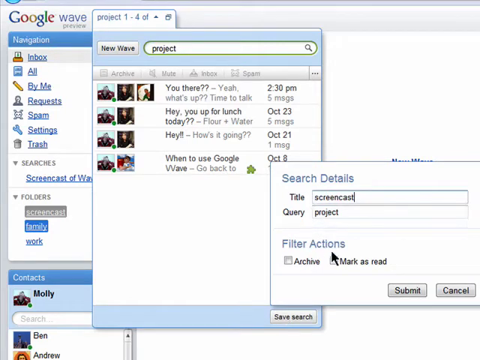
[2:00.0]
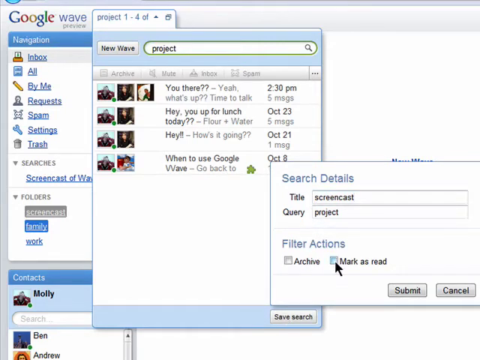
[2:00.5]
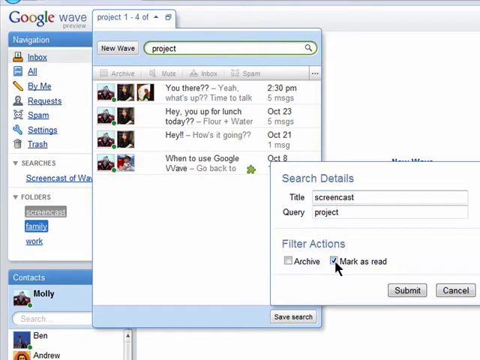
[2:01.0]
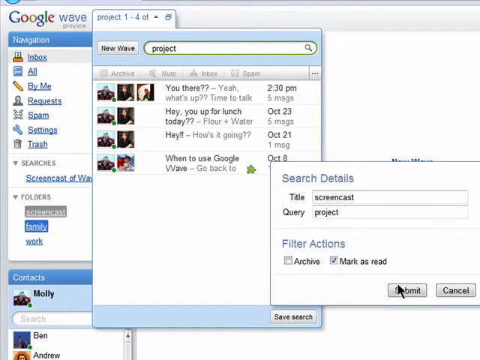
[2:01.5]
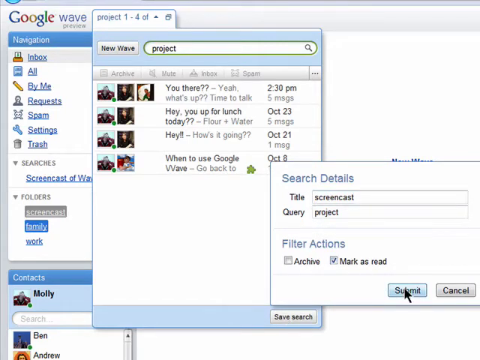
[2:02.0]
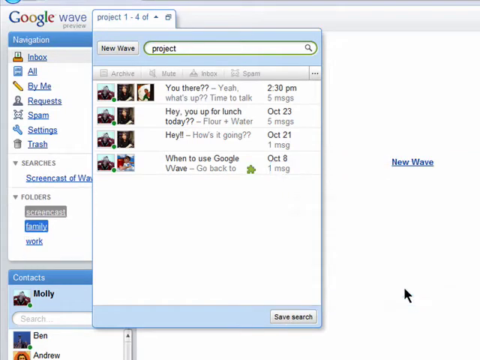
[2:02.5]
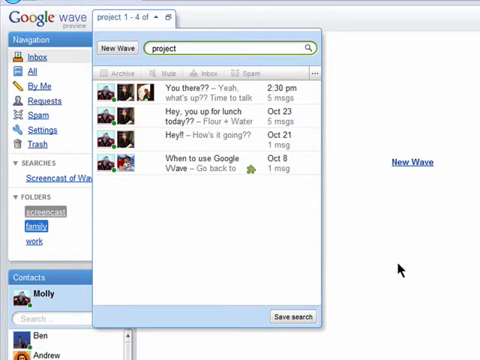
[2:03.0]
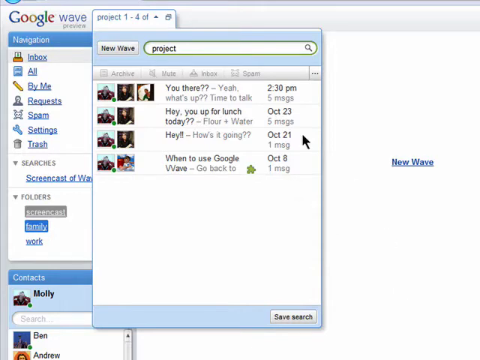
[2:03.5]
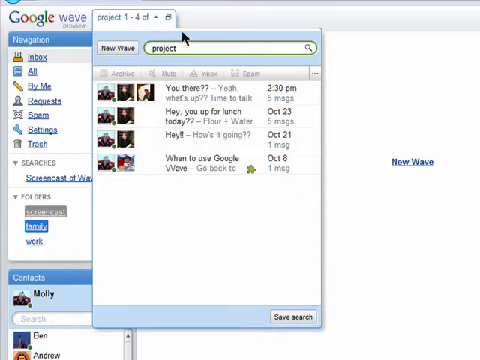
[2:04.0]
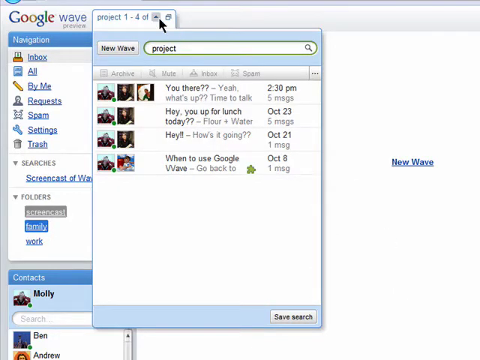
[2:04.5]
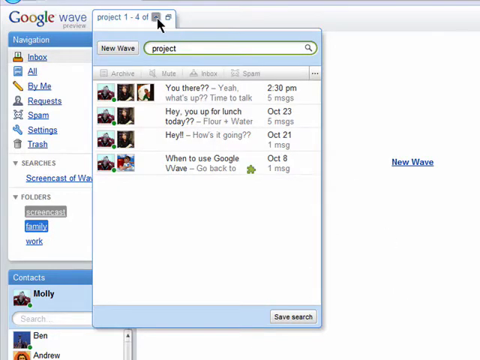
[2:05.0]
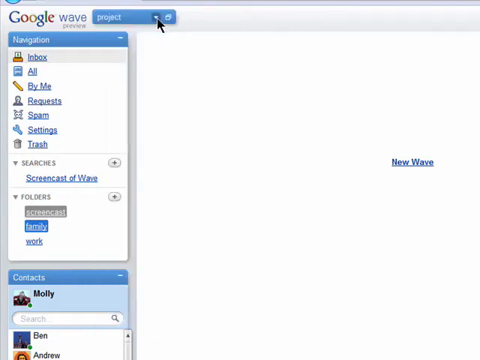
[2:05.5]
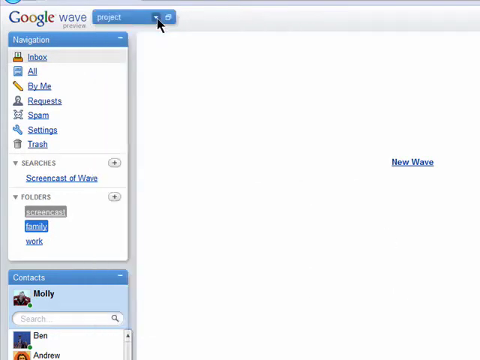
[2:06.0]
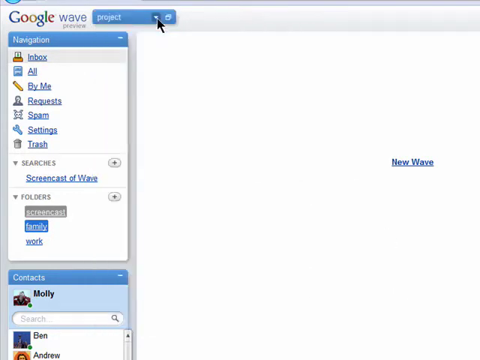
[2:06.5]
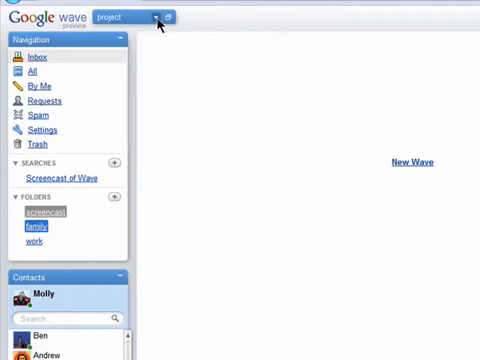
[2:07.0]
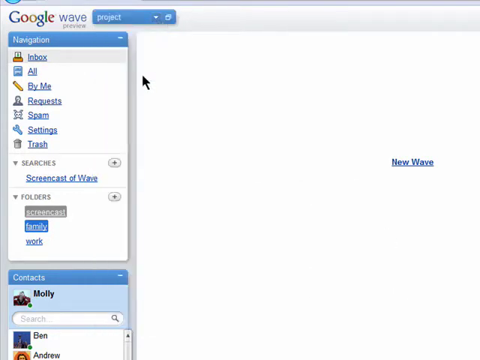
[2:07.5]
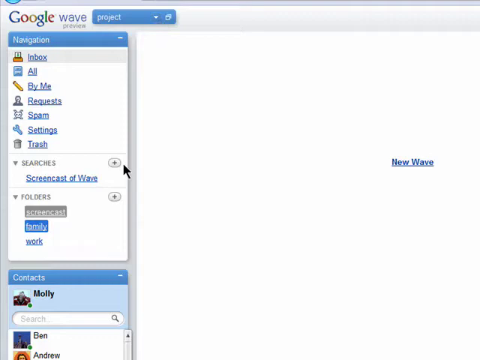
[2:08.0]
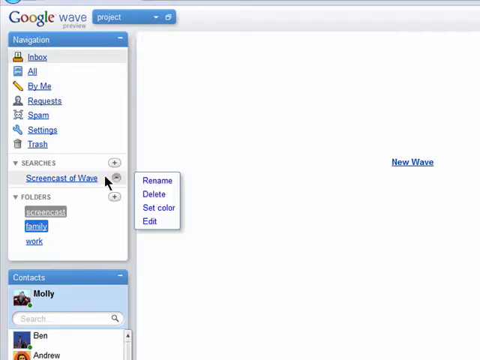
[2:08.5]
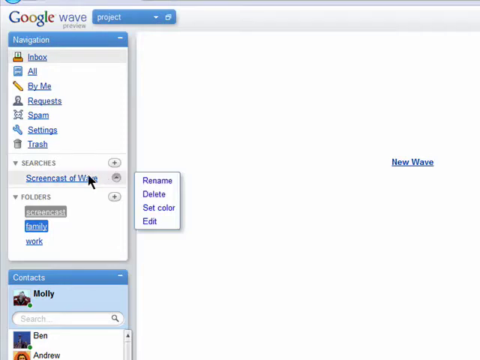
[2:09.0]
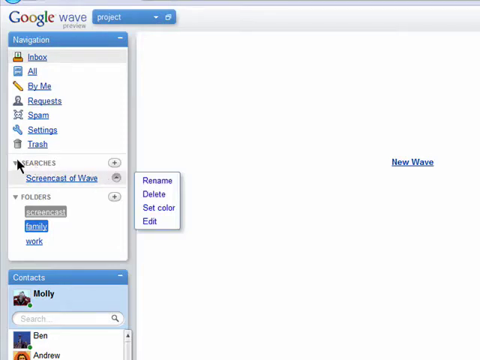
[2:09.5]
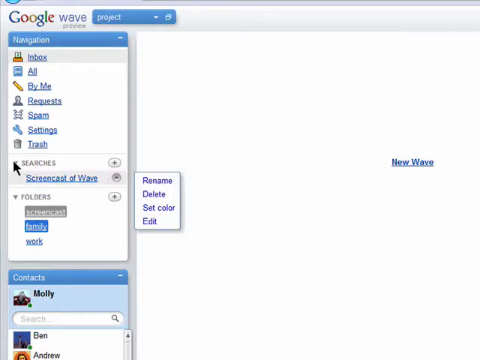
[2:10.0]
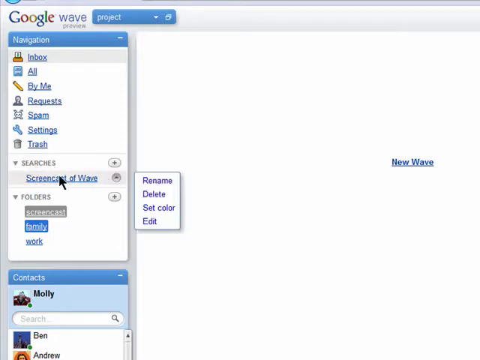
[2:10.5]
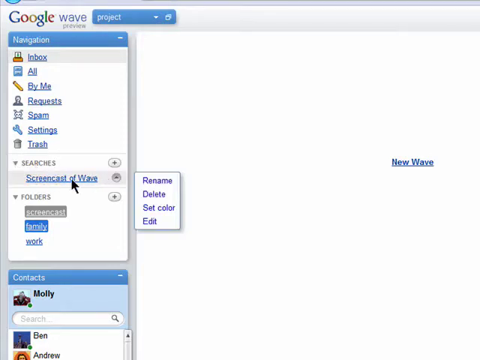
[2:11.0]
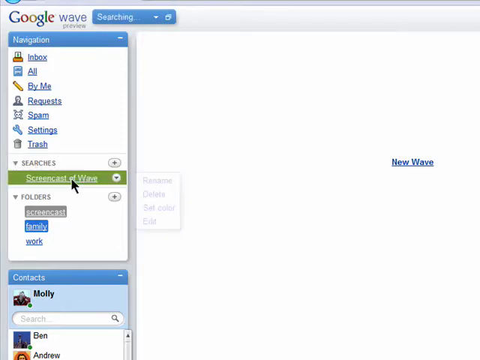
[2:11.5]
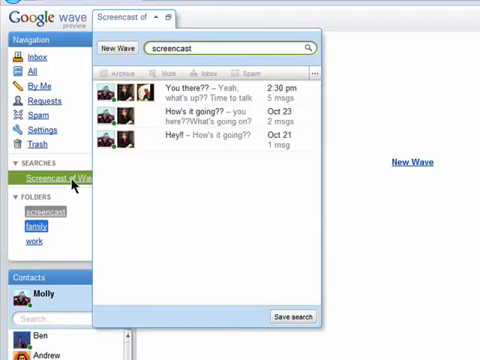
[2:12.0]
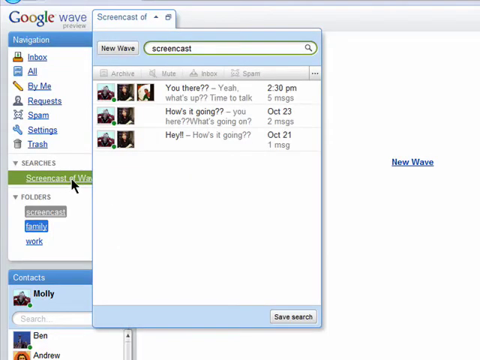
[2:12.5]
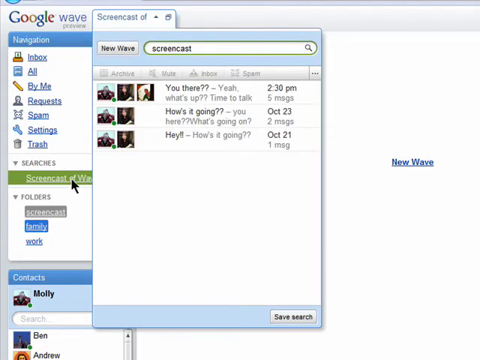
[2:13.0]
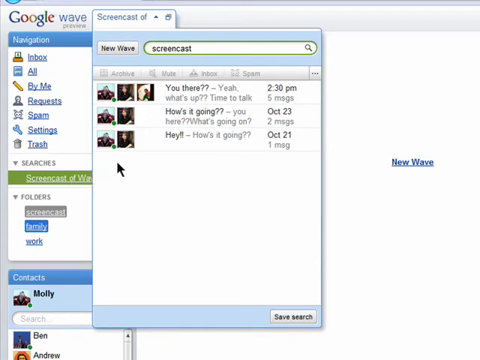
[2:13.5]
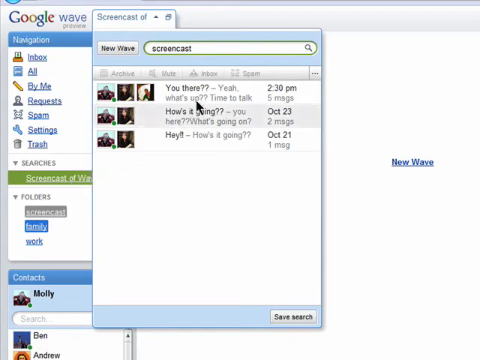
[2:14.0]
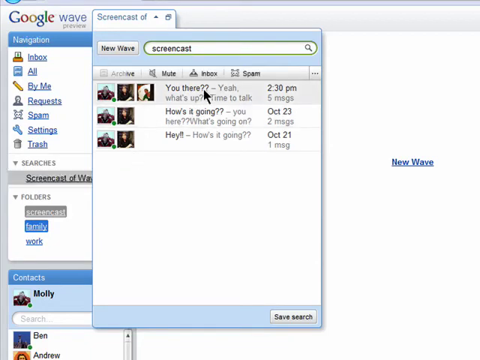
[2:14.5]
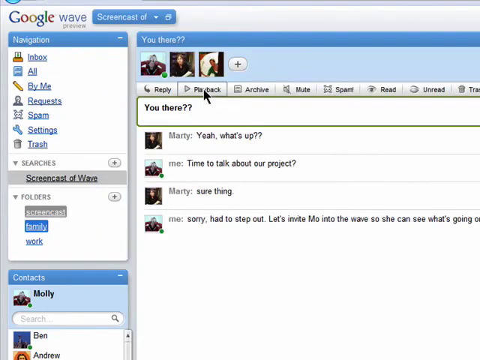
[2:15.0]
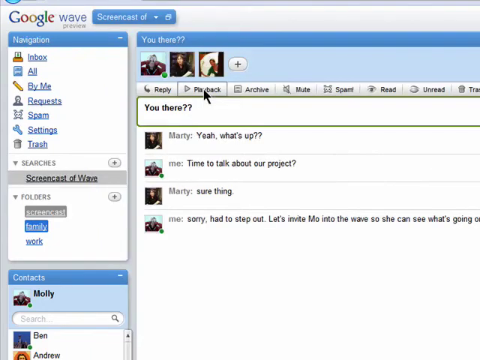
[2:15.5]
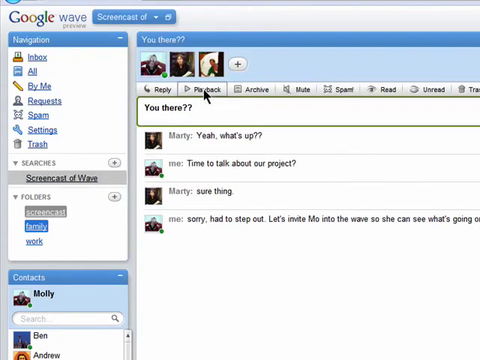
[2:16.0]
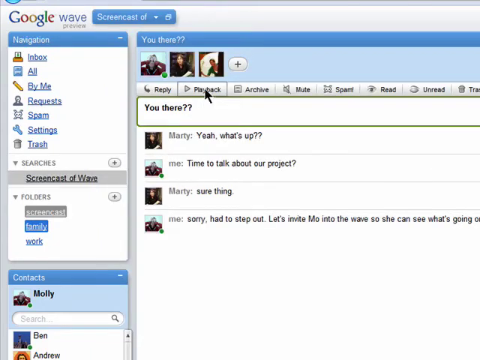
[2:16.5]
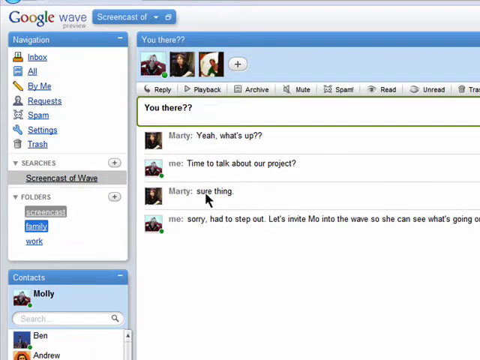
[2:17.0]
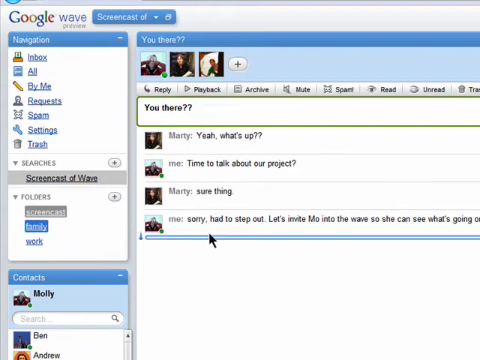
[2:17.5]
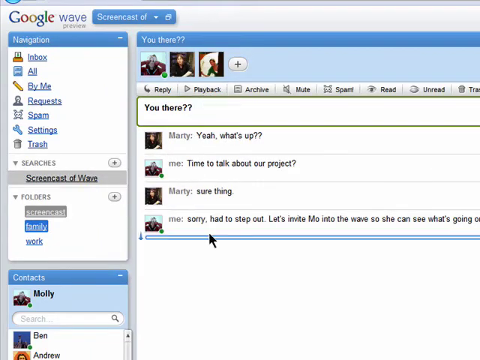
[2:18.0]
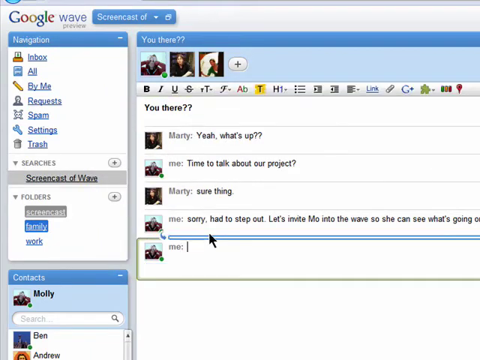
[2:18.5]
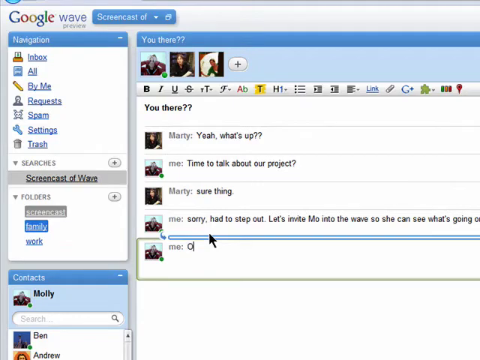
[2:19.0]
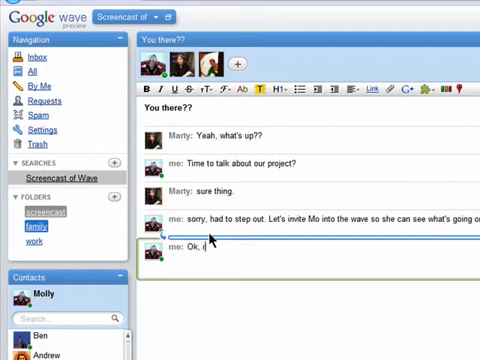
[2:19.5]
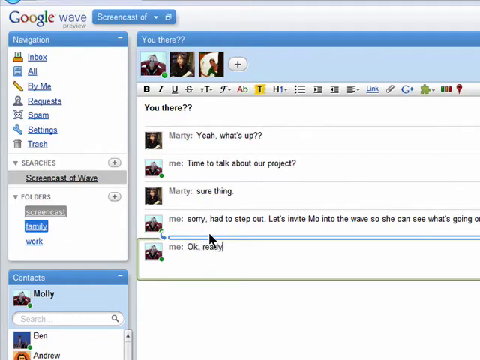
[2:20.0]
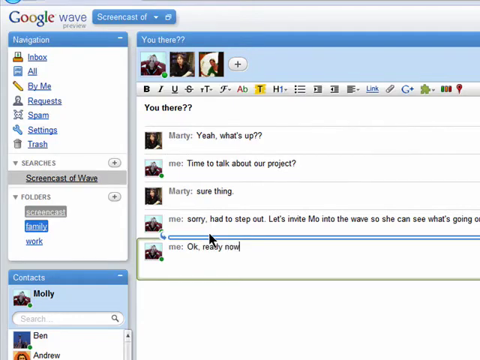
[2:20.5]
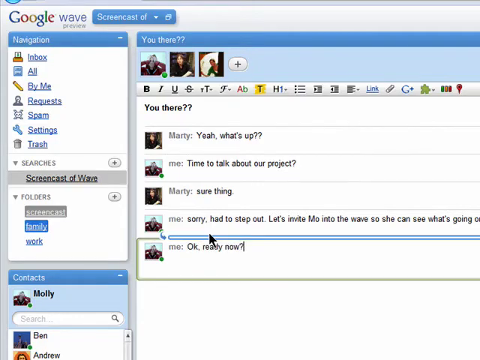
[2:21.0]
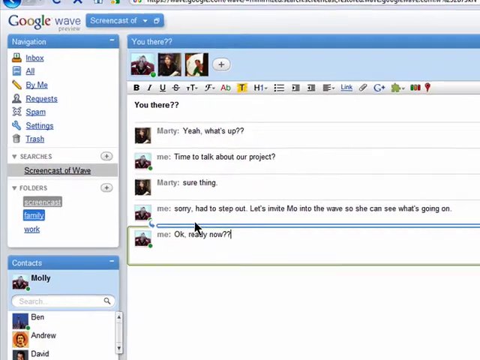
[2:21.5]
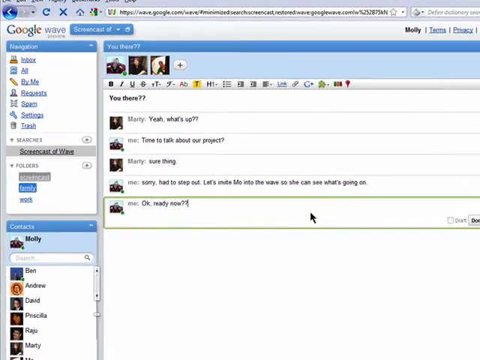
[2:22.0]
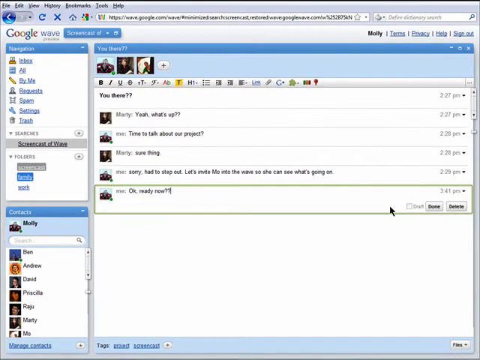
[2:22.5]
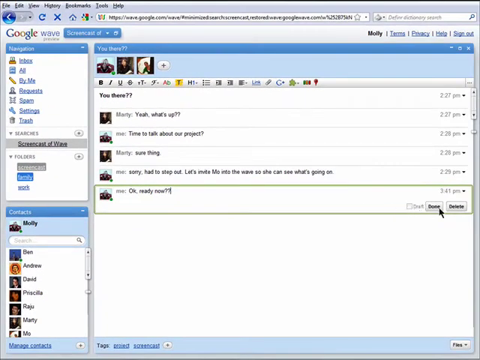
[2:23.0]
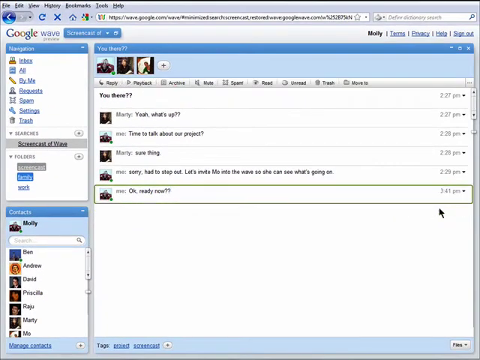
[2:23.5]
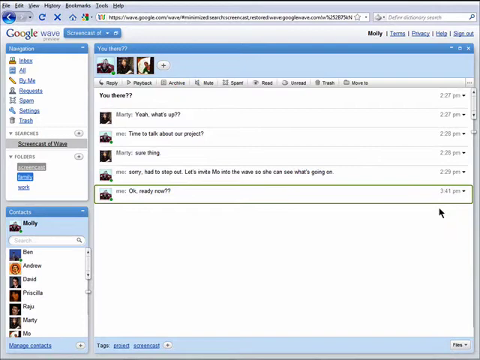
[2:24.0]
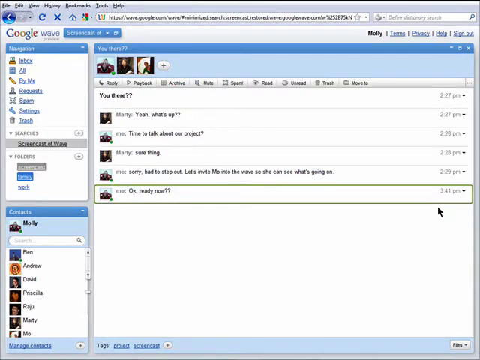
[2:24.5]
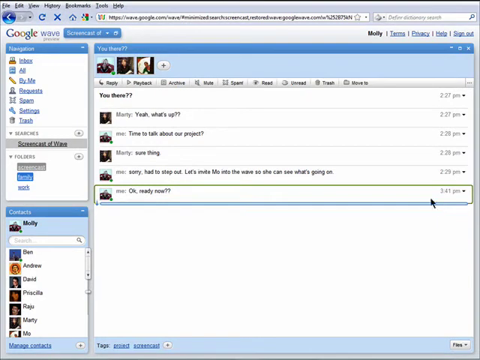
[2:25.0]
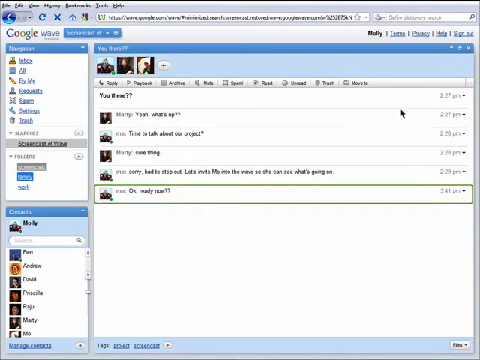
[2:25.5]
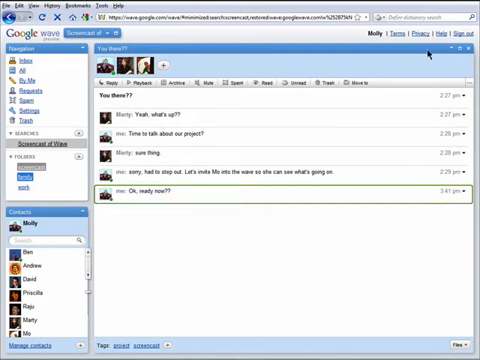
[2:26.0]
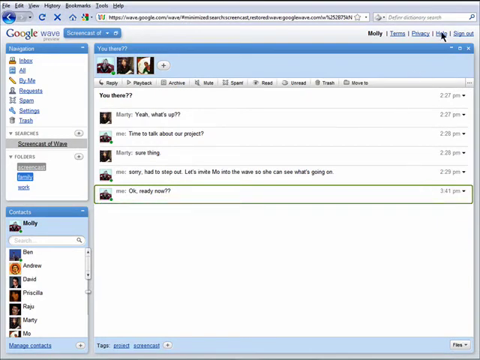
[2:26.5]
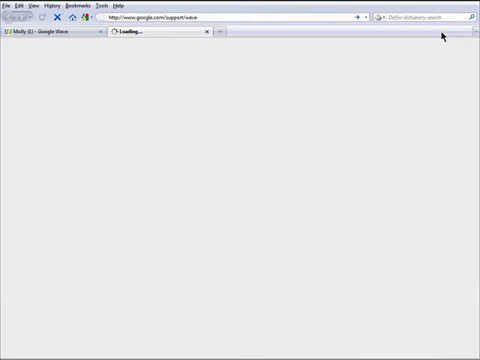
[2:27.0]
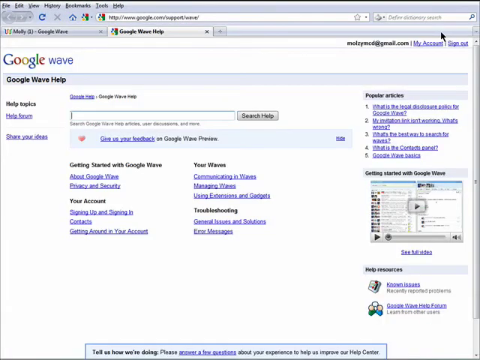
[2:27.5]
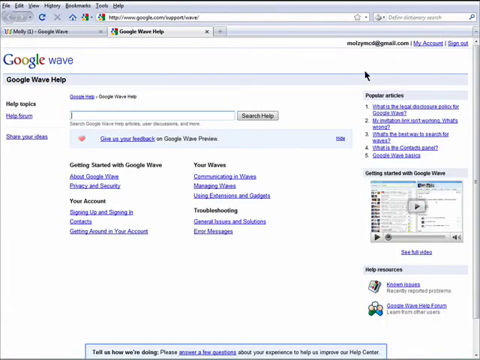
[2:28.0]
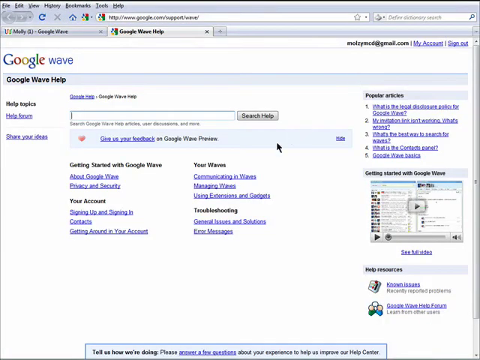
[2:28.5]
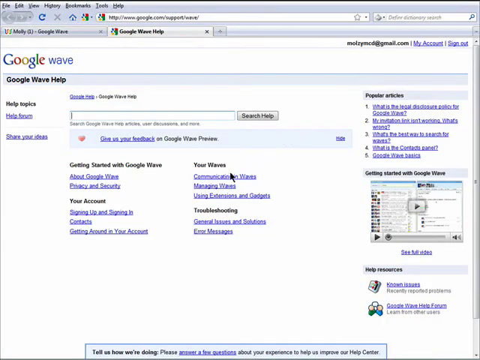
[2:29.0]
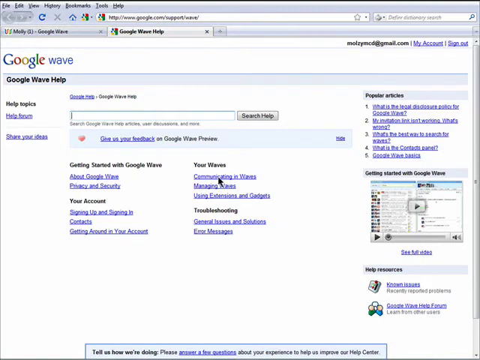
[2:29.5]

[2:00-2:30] The guy is still on the search details pop-up. He clicks mark as read and then the submit button; there is also a cancel button to its right. The view now shows a project tab, with new wave where "projects" was typed and four results showing. He scrolls up and moves the cursor to the top of the page, where a collapse button to the right is highlighted. He clicks it and the whole section collapses up into the top part, which just says "project" in blue; clicking it again would pull down the list of four projects. He moves the cursor down to screencast of wave, and a pop-up with rename, delete, set color and edit appears to its right. He clicks it, and the screencast results appear, this time only three: one at 2:30 saying "you there", "how's it going" from October 23rd, and "hey how's it going" from October 21st. He clicks the first, which says "you there" and shows an exchange between Marty and "me", including "time to talk about a project?" He goes down and types something that says "okay really now". He zooms out a little and clicks Done, which shows the time, 3:41. He then clicks the help hyperlink at the top, which goes to a Google Wave page with a search help button, scrolls down to the communicating hyperlink, and clicks it.